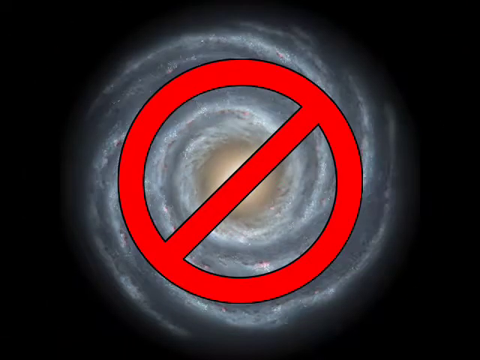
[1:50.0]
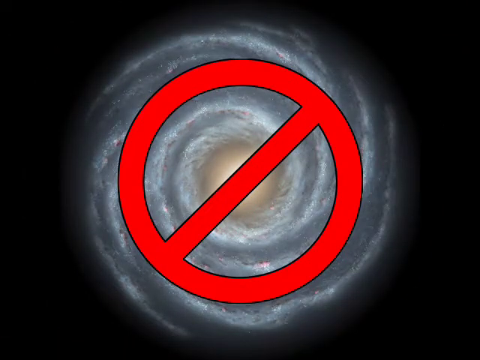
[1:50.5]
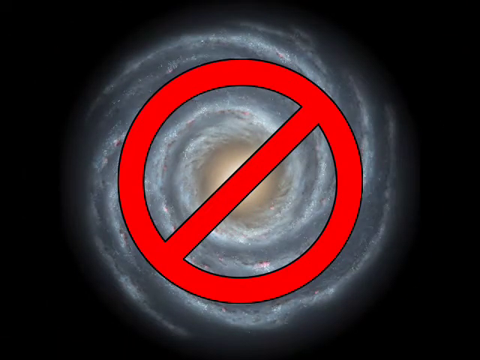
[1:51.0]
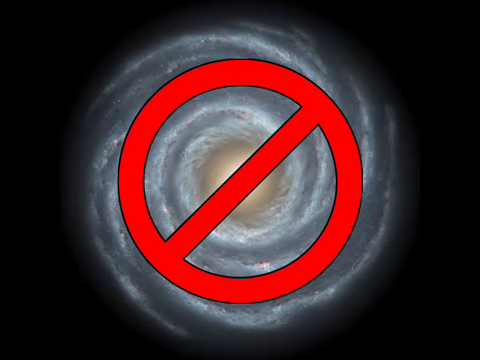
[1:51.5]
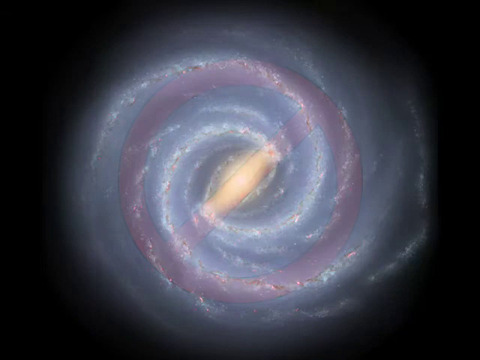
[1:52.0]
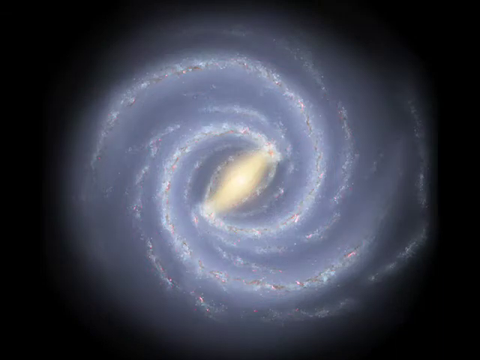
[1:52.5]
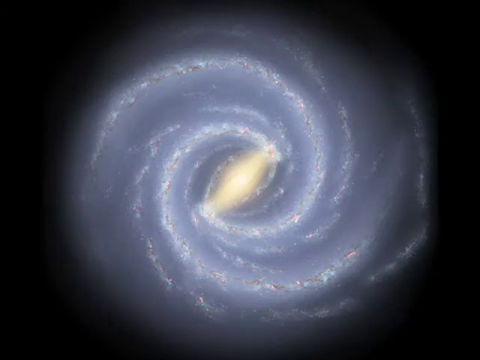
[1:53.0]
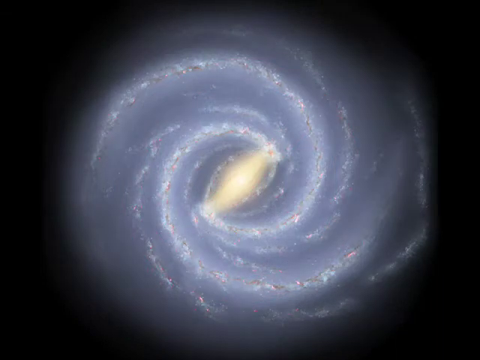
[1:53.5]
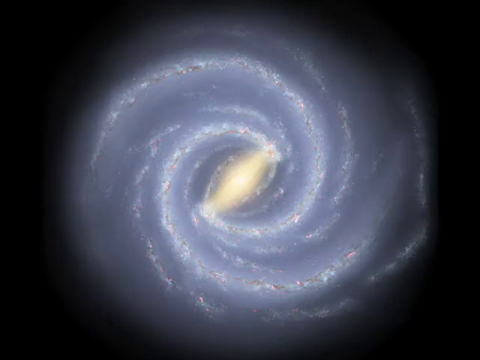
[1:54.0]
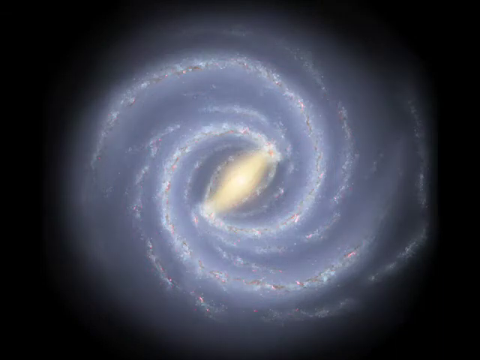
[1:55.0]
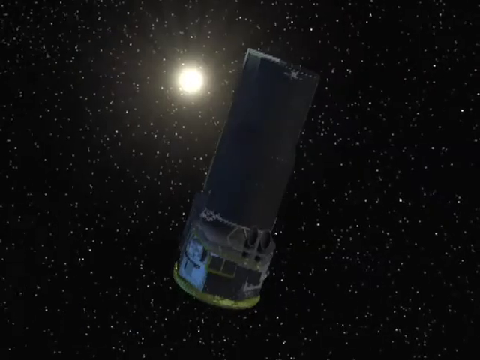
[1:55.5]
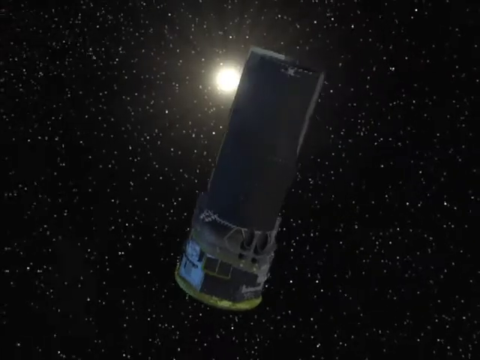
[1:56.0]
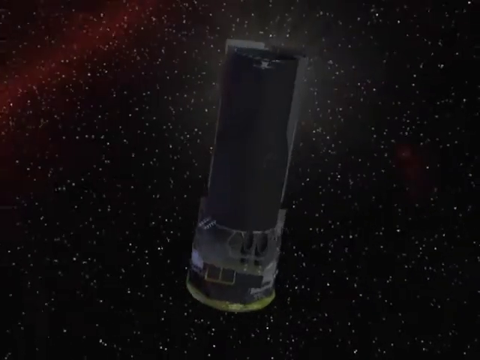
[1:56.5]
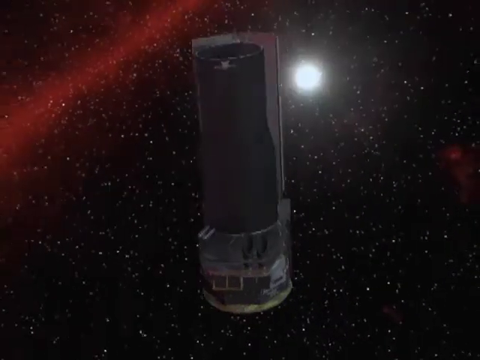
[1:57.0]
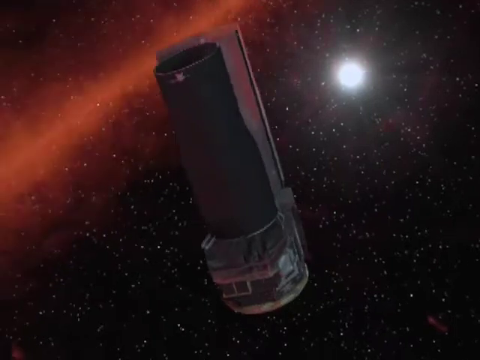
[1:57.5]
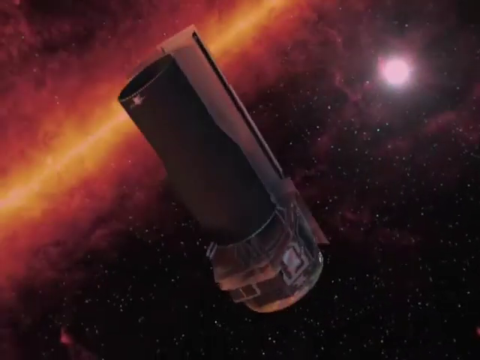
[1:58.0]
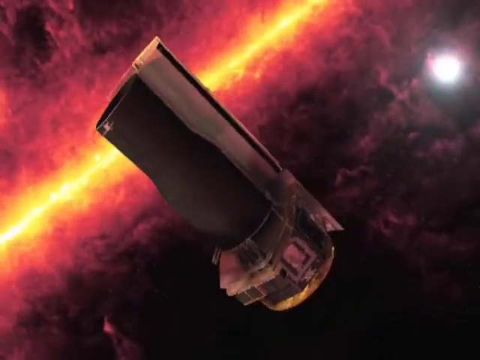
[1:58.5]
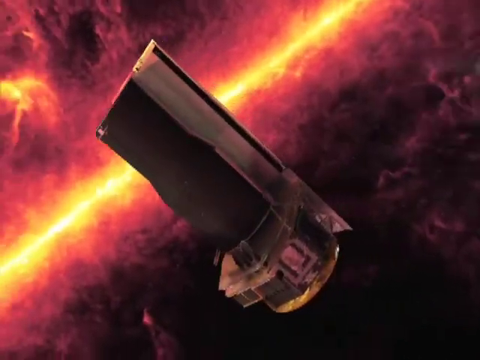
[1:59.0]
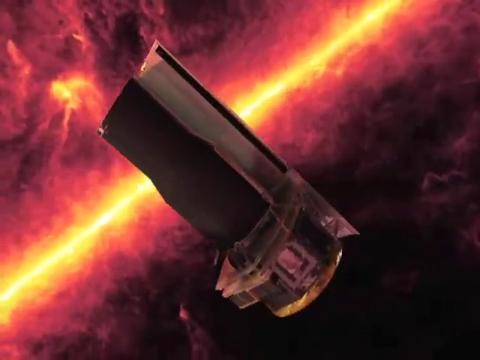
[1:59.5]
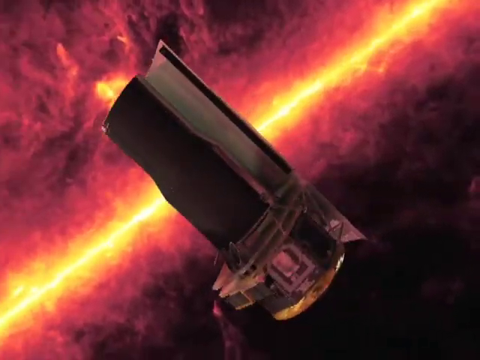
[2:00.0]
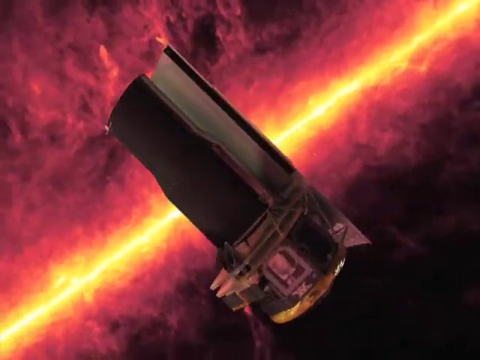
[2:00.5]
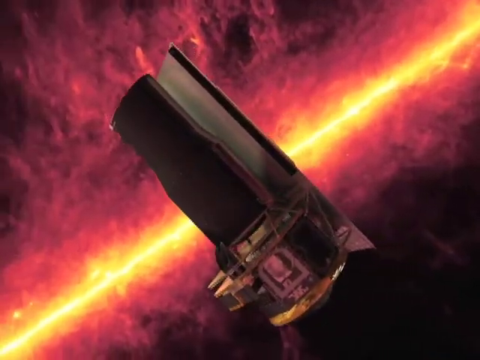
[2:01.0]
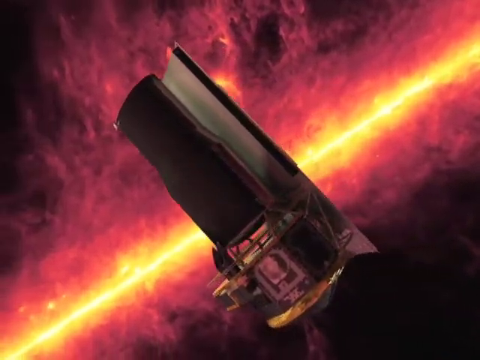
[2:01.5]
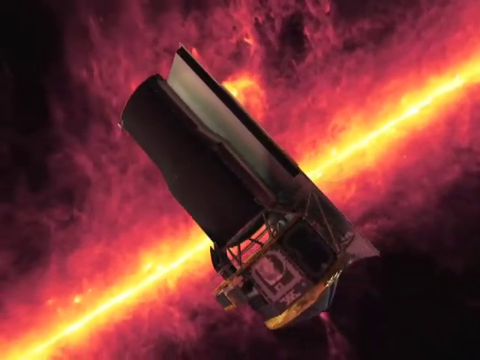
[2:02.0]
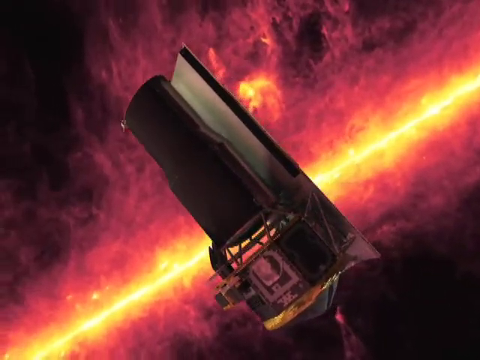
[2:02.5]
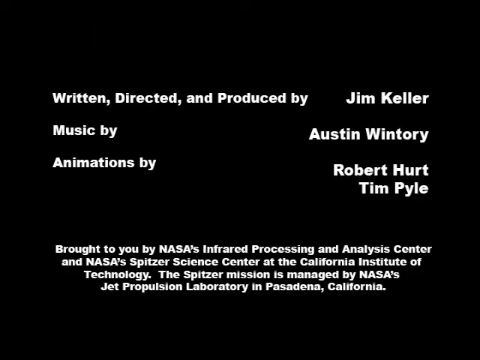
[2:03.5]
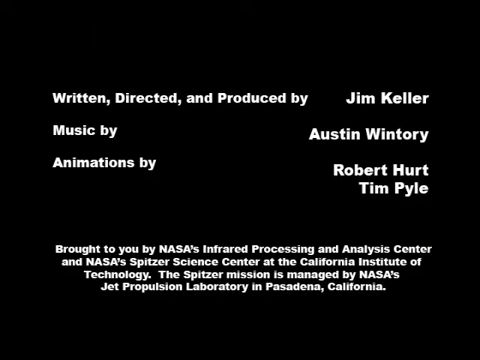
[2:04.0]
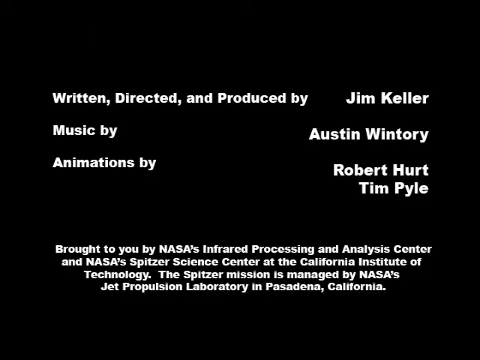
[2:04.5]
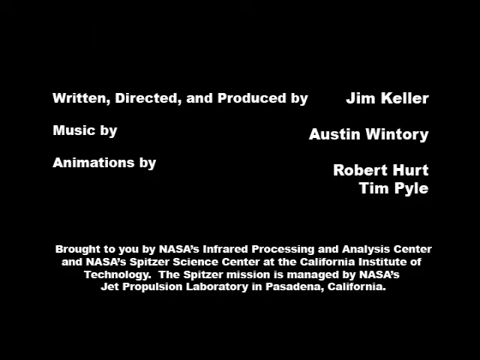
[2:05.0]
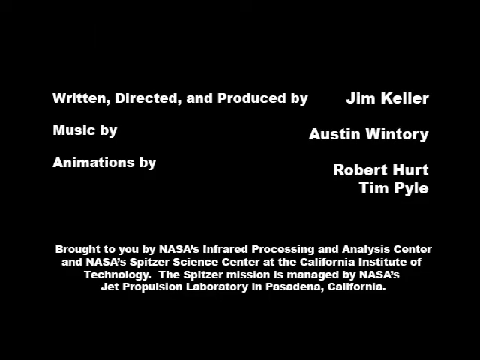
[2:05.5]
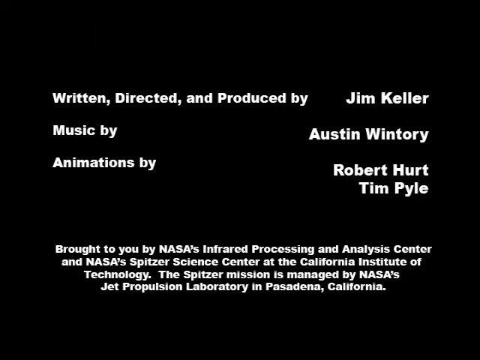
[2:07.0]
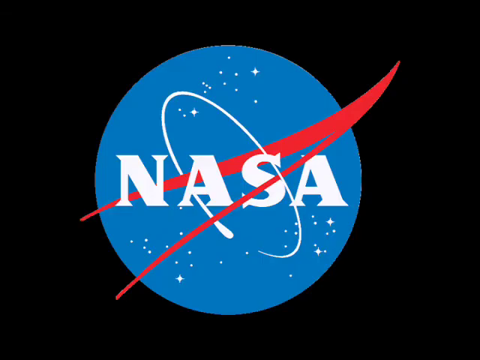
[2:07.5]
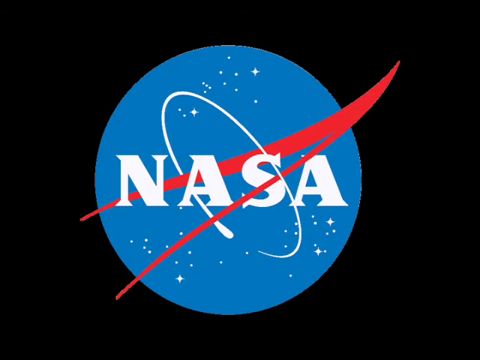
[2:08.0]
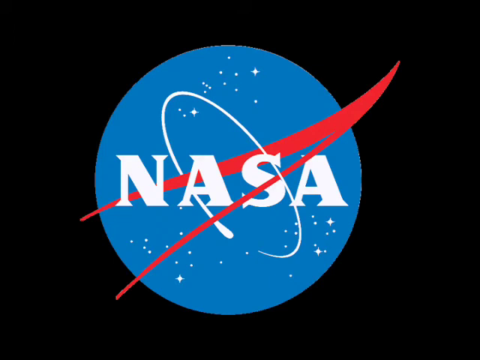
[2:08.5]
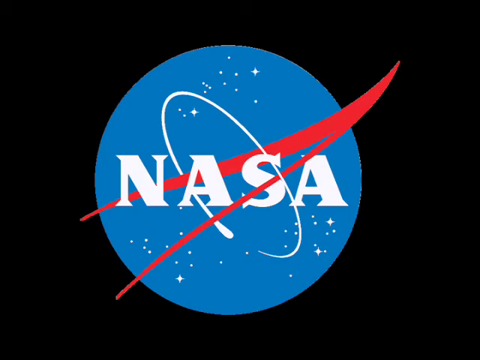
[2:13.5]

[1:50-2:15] The video shows machines. Credits read "Written, directed and produced by Gene Taylor", "music by Austin Wintory" and "animations by Robert Hart", and also mention NASA and the California Institute of Technology.